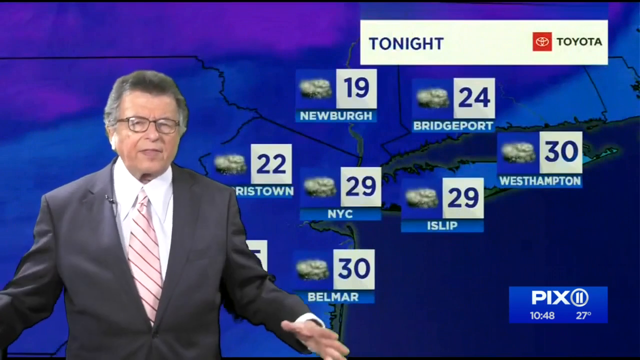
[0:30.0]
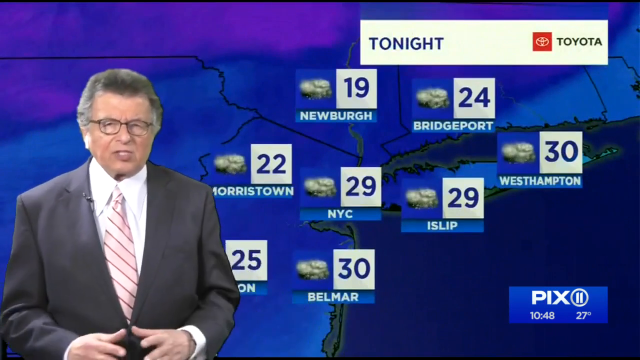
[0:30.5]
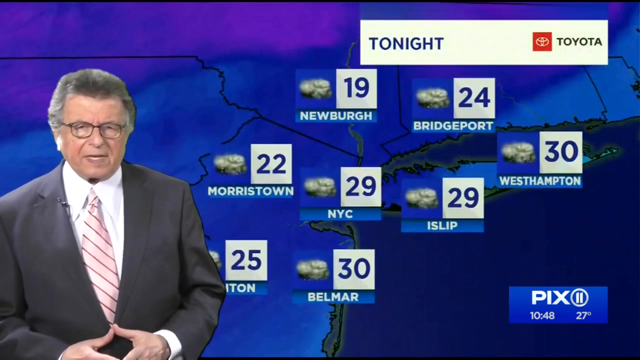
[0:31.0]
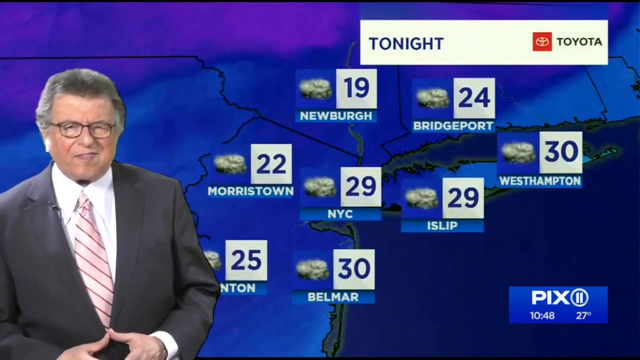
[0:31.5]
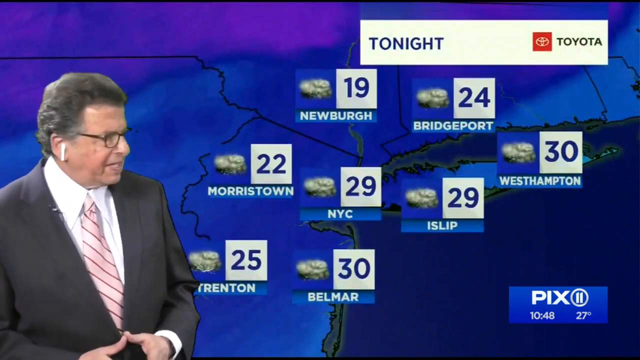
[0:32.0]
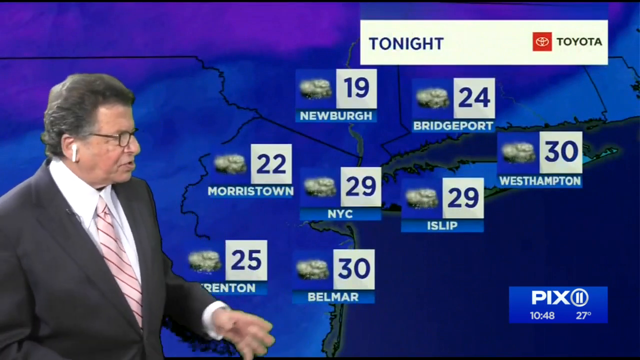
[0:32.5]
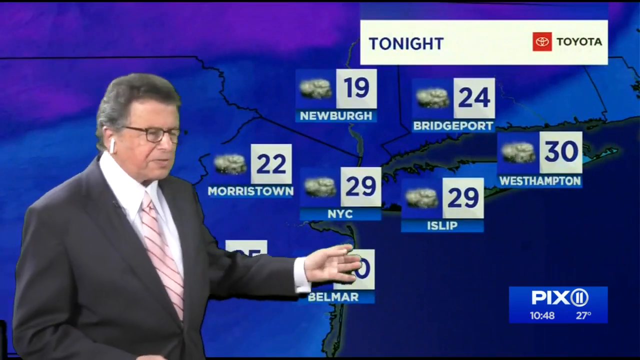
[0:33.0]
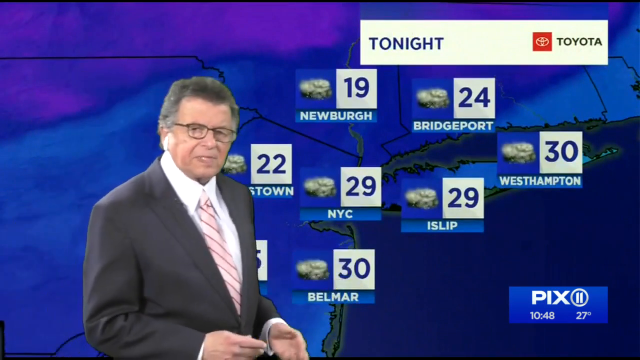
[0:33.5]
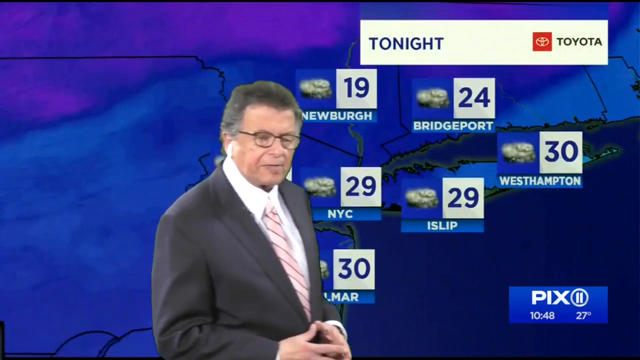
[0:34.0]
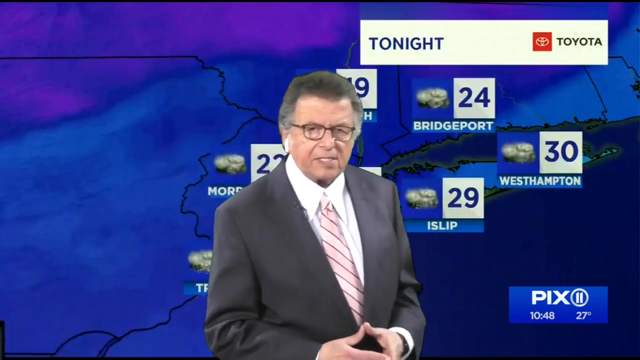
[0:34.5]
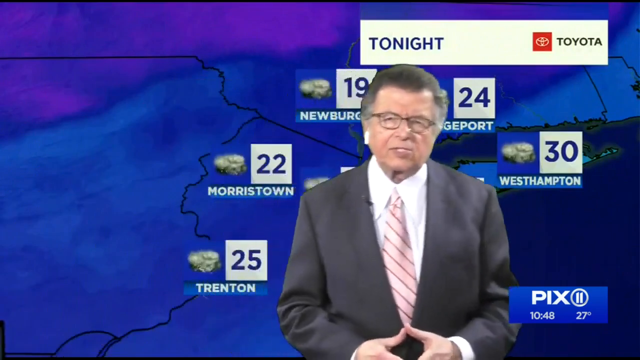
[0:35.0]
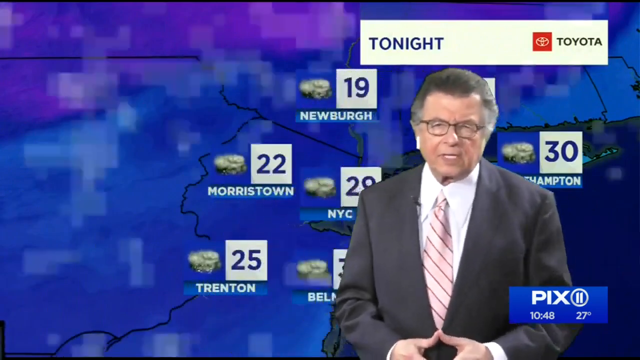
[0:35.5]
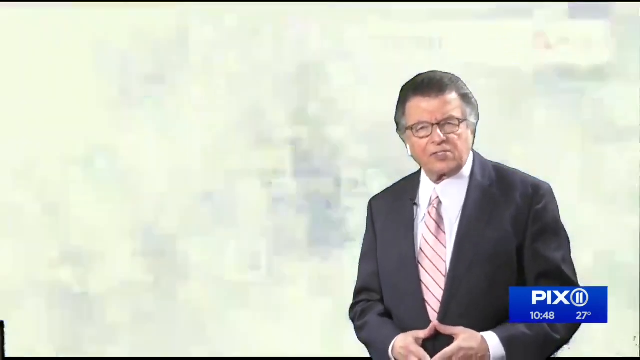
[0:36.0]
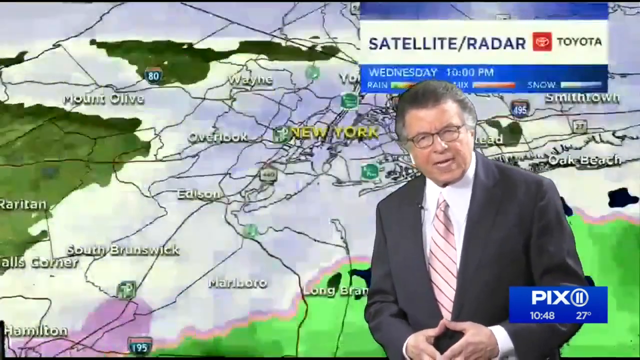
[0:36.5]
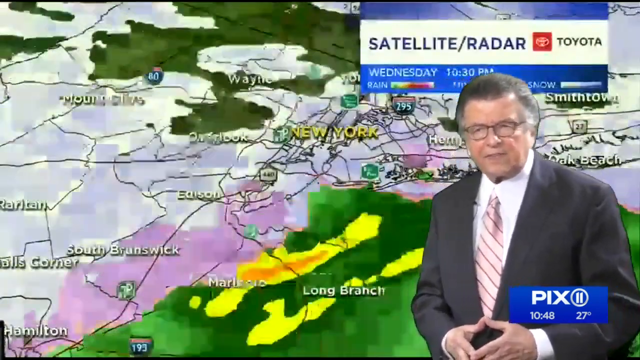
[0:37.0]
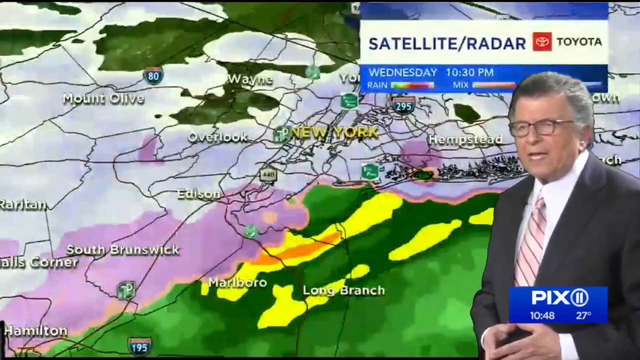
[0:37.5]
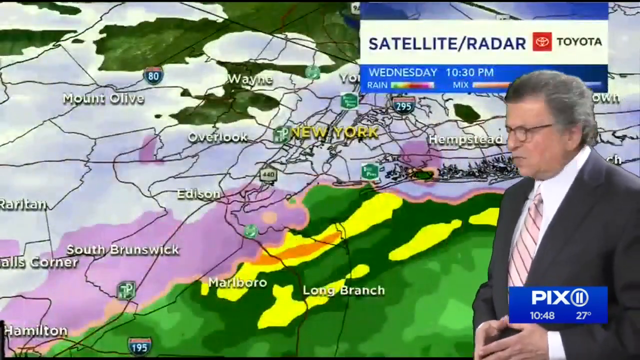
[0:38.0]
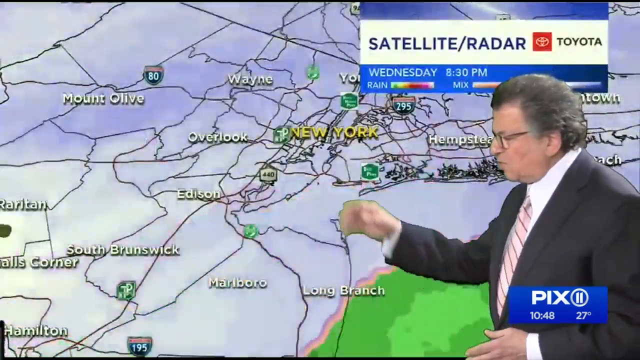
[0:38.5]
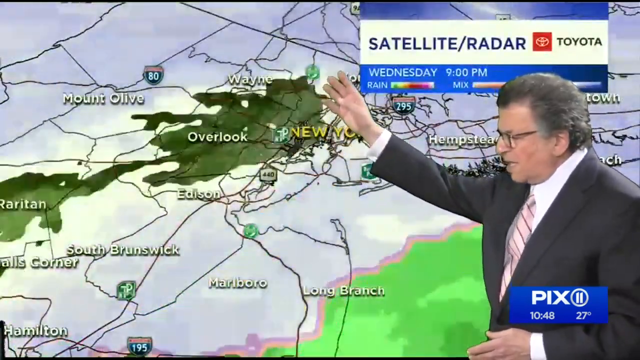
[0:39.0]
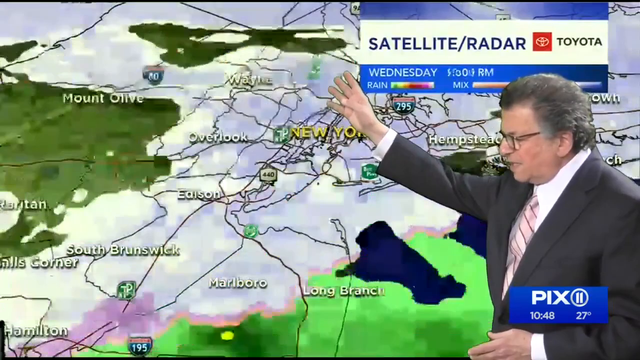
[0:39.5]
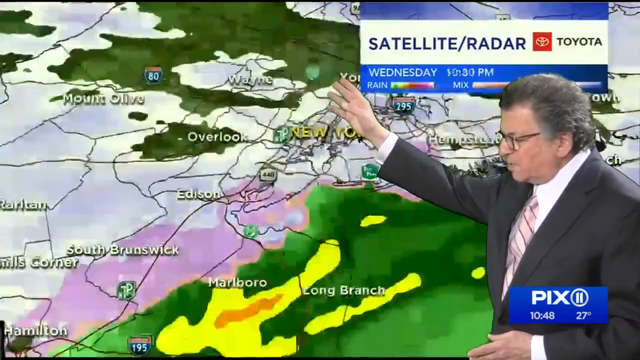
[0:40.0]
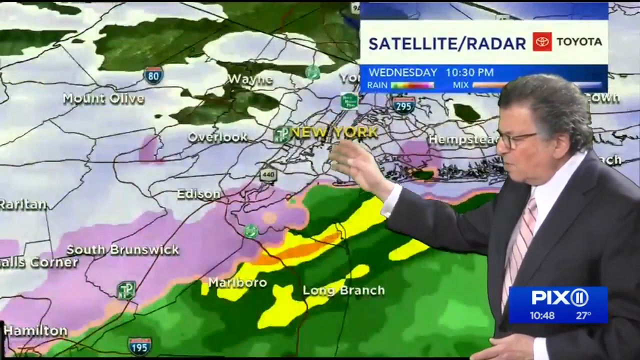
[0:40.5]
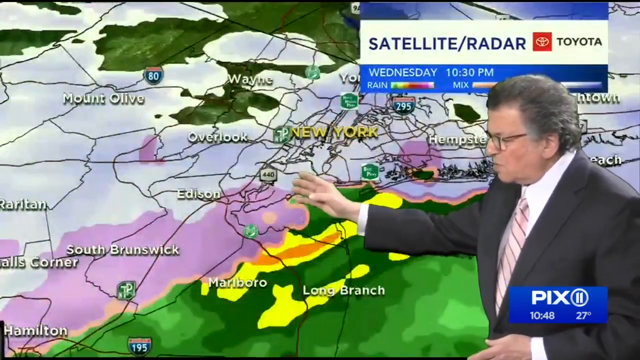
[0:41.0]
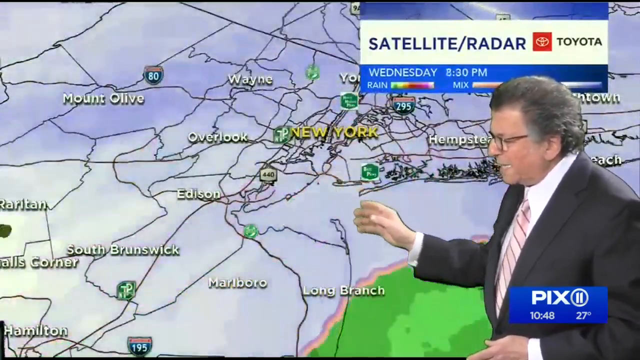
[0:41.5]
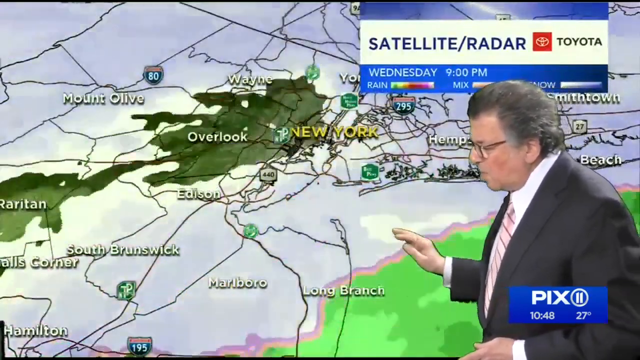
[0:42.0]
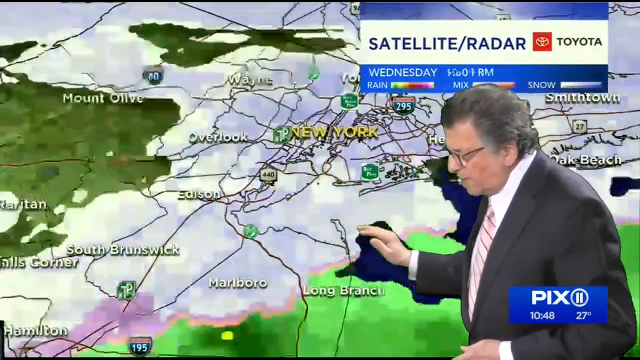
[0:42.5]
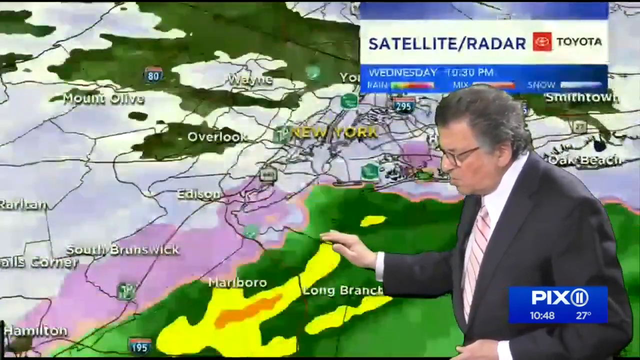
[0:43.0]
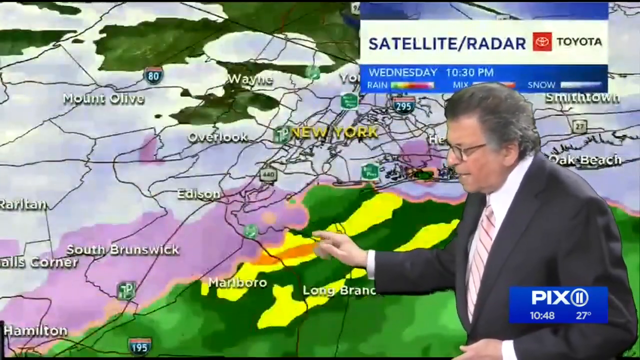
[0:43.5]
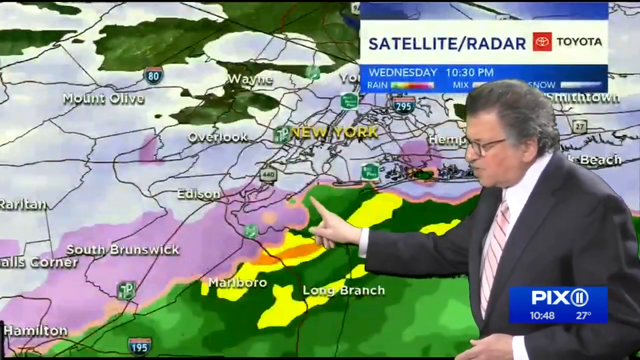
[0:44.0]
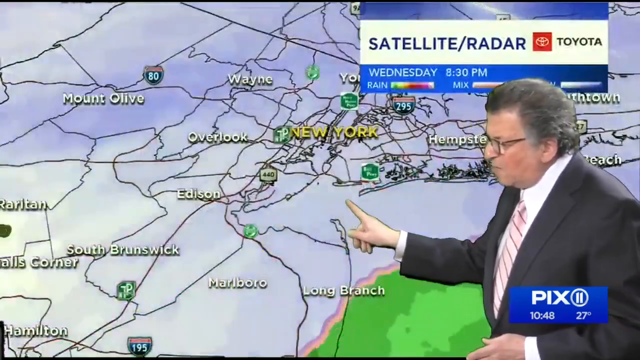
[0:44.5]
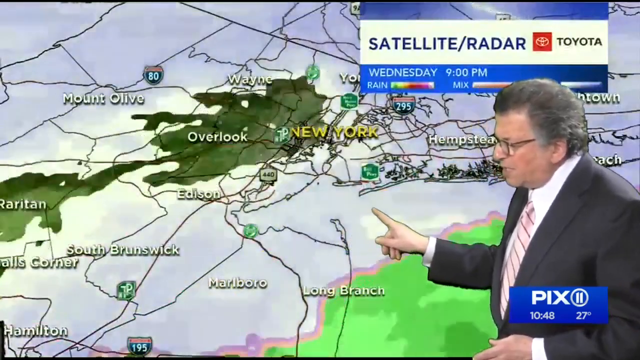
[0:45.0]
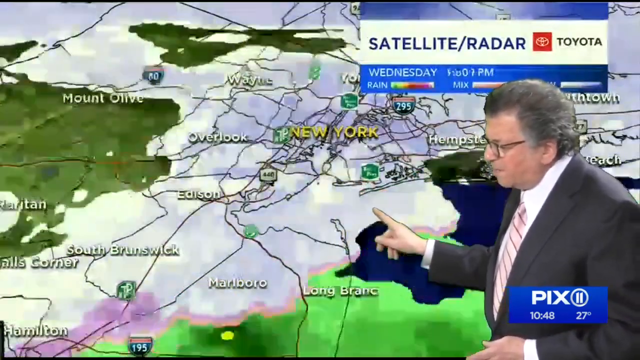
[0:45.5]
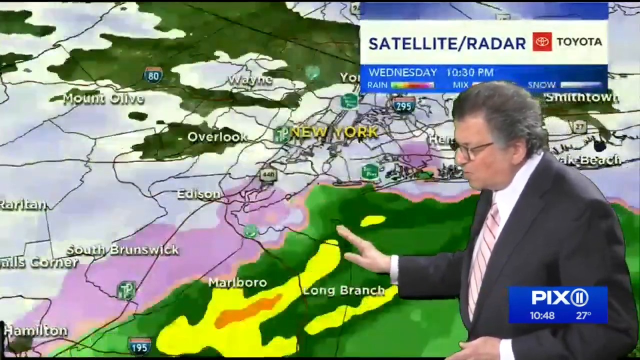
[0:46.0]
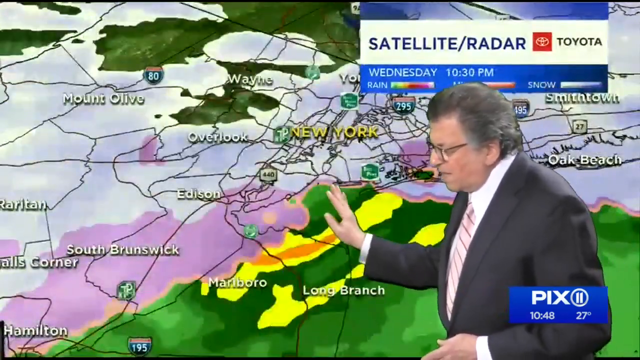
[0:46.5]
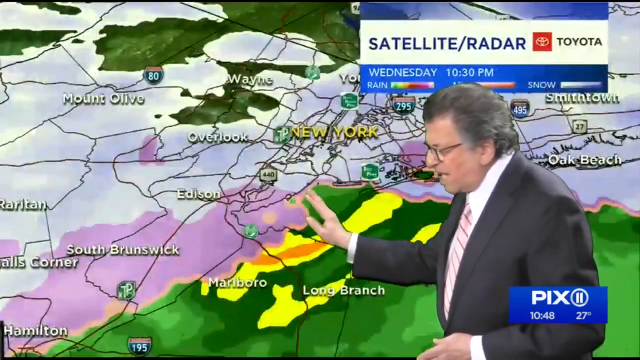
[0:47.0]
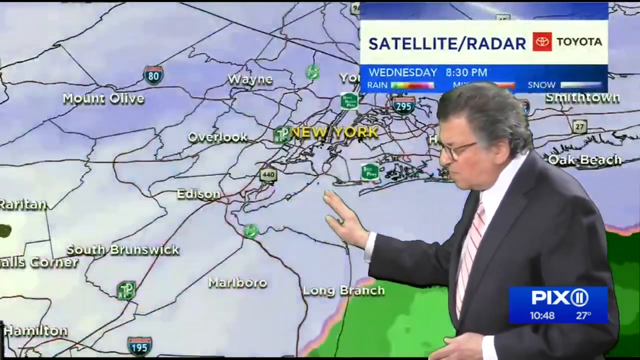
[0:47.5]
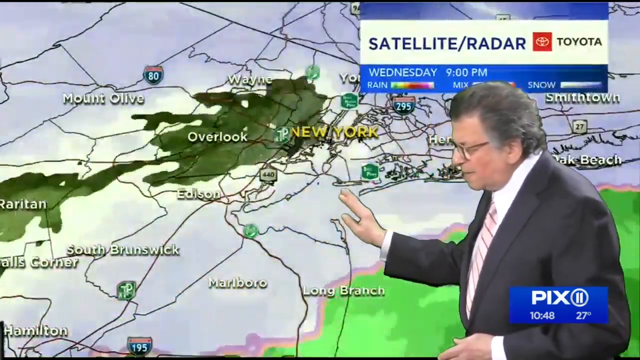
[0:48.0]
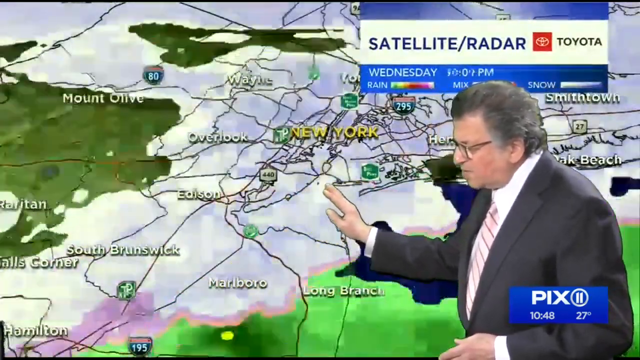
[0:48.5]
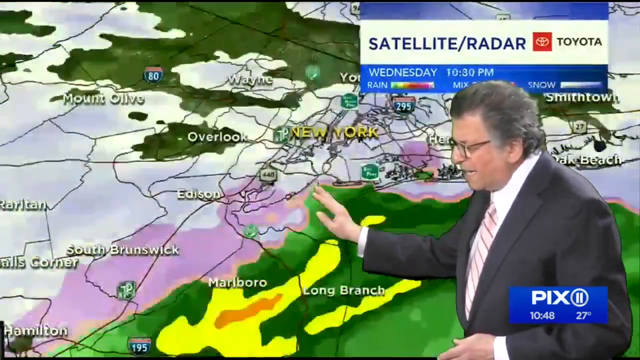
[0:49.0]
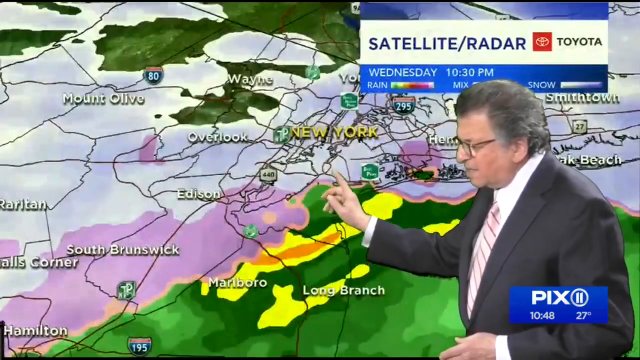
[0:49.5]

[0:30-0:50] The man shows temperatures for different places, such as Morristown and New York City, followed by a satellite radar with a lot of green and yellow above New York. The radar is shown for Wednesday at 9, 10 and 10:30, stepping through different hours of Wednesday. Tonight's temperatures are shown for Newburgh, Bridgeport, West Hampton, Islip, New York City and Norristown. The rain level and the mix of rain and snow are displayed, with green and yellow areas moving right over the region.